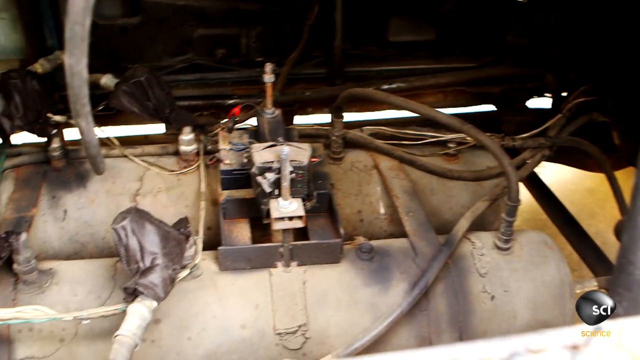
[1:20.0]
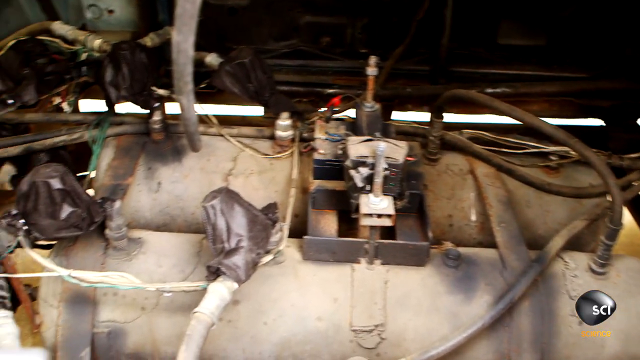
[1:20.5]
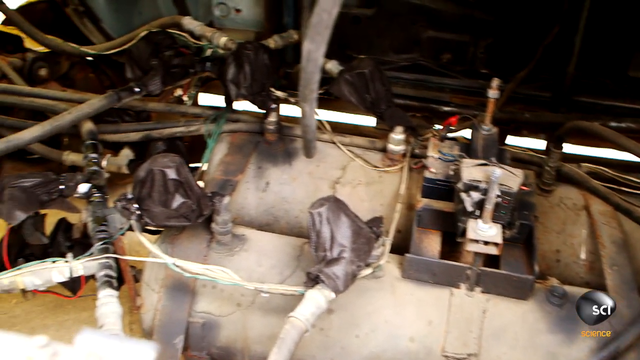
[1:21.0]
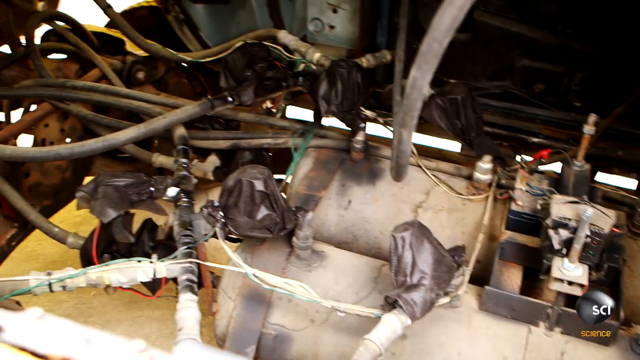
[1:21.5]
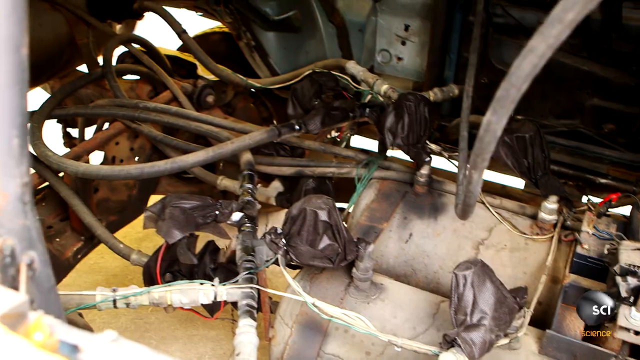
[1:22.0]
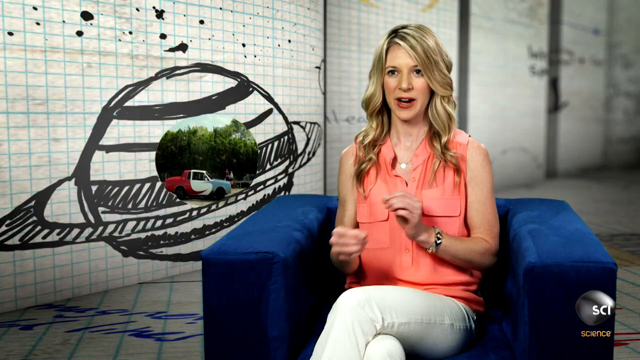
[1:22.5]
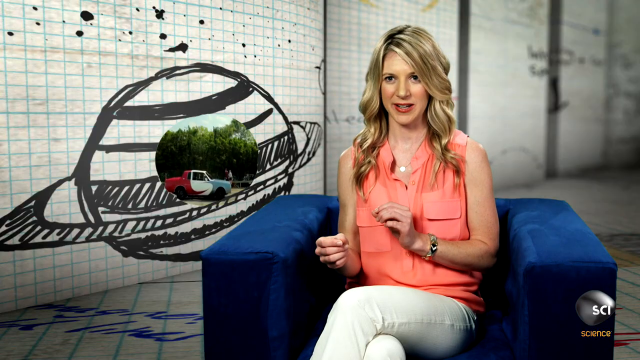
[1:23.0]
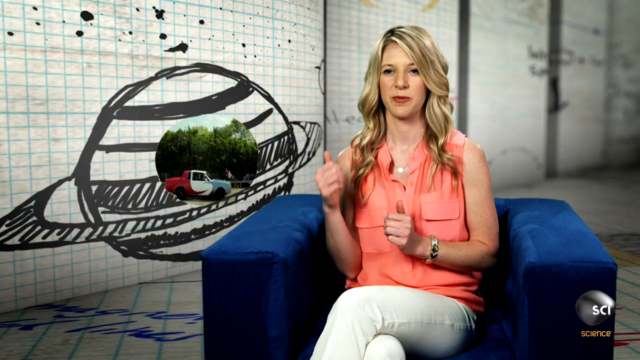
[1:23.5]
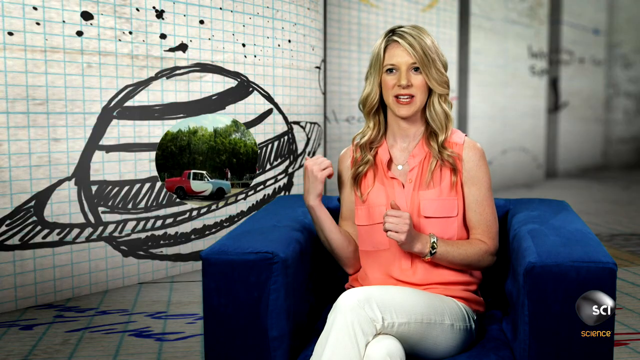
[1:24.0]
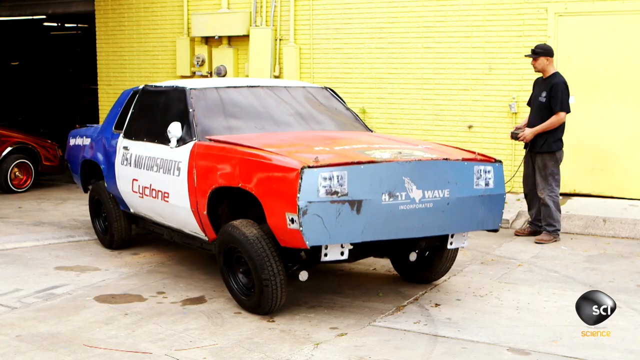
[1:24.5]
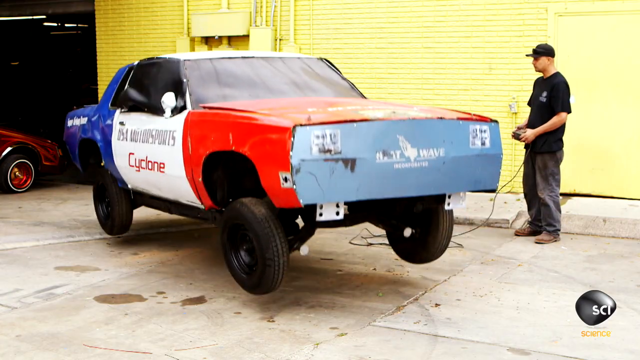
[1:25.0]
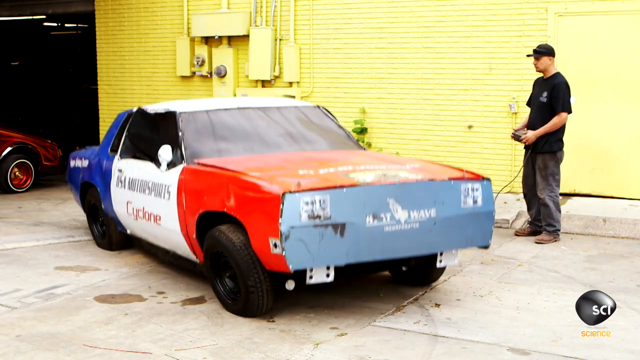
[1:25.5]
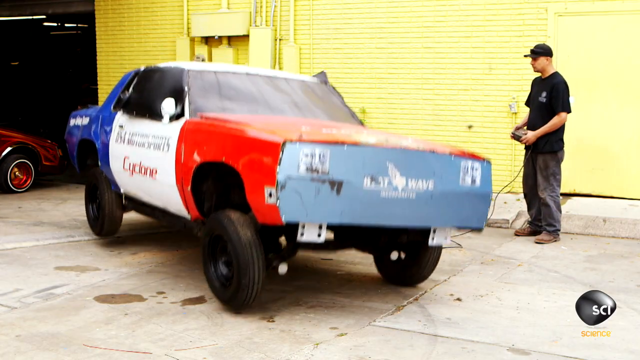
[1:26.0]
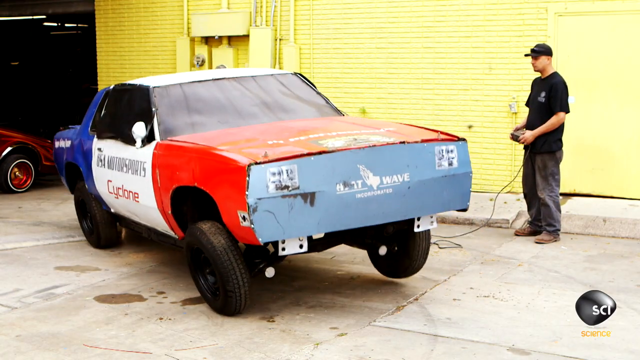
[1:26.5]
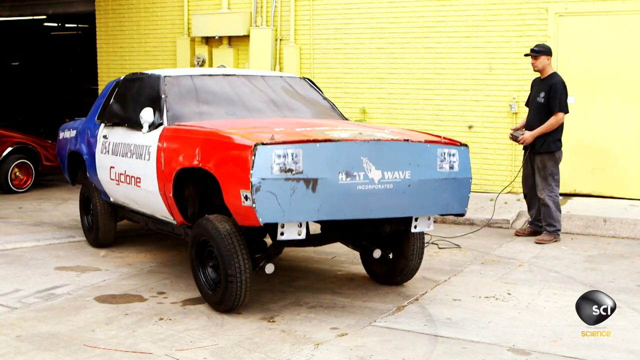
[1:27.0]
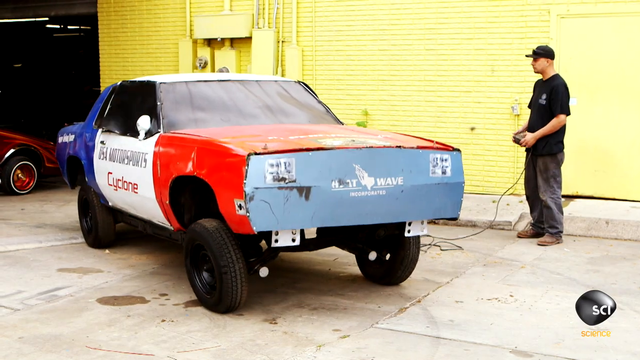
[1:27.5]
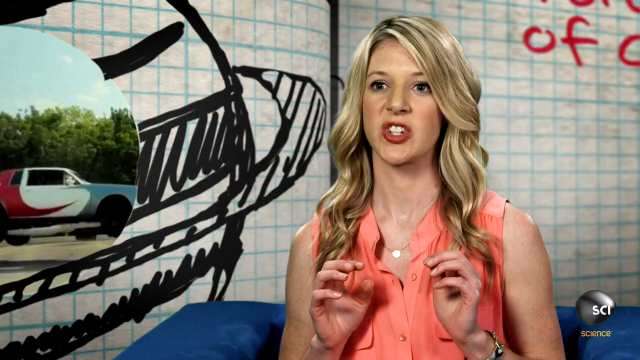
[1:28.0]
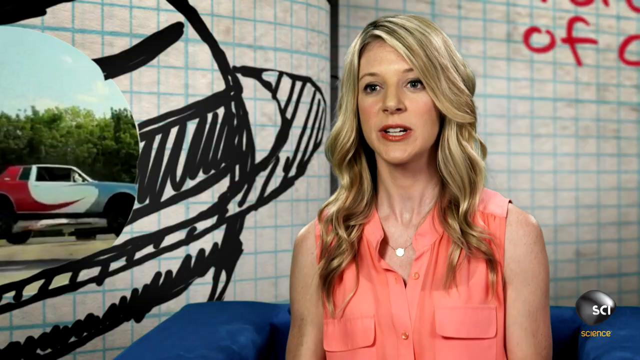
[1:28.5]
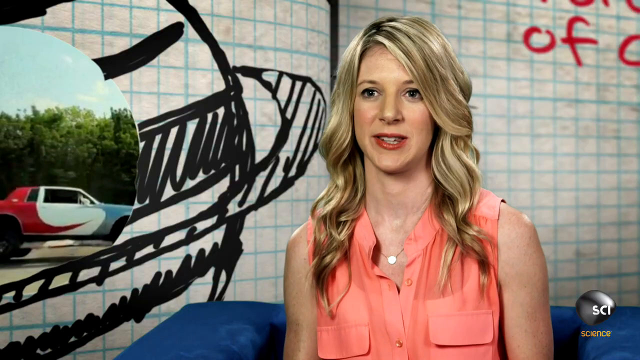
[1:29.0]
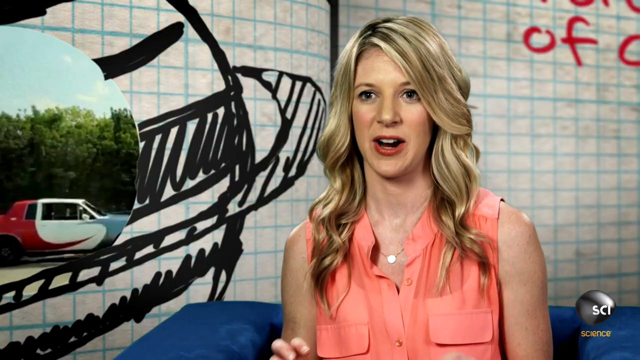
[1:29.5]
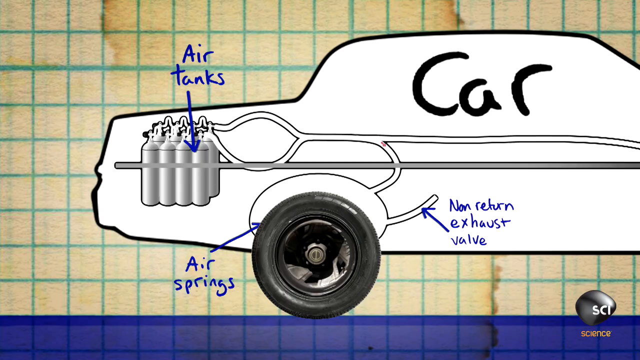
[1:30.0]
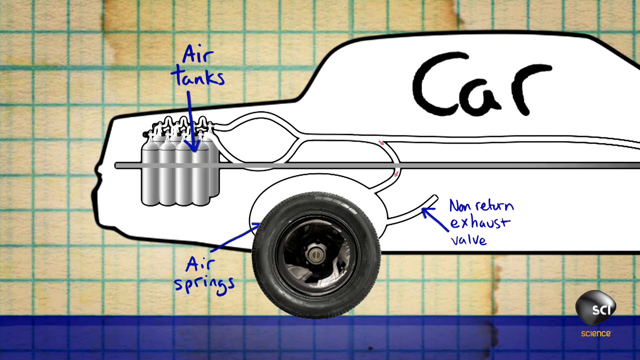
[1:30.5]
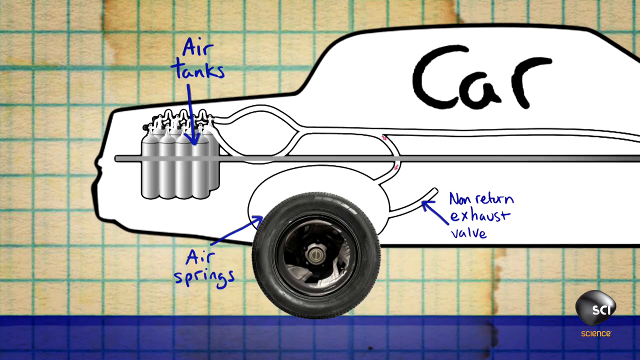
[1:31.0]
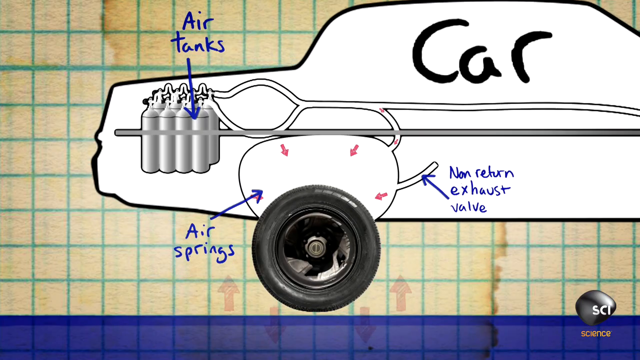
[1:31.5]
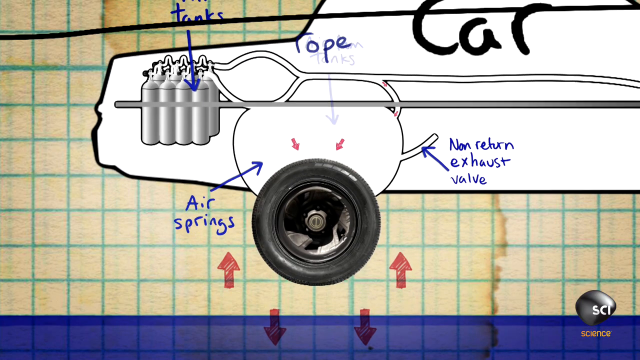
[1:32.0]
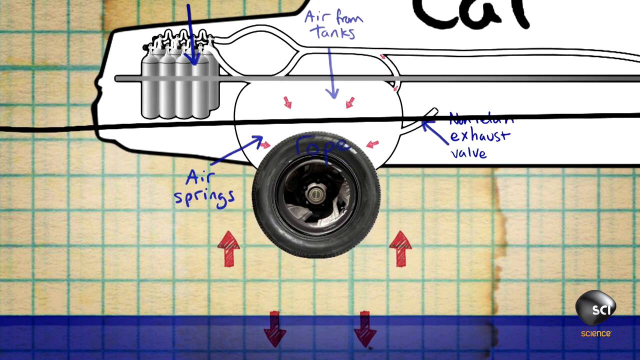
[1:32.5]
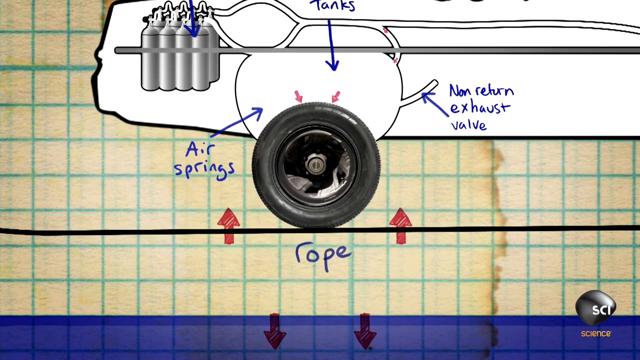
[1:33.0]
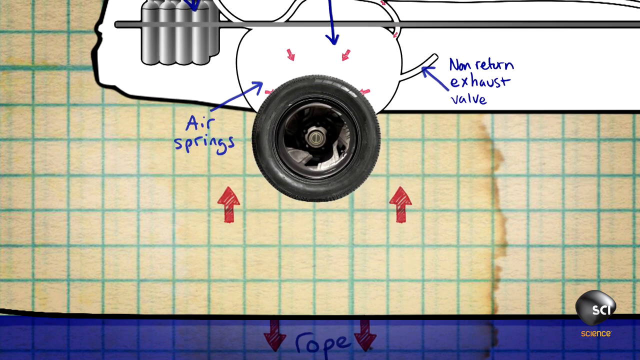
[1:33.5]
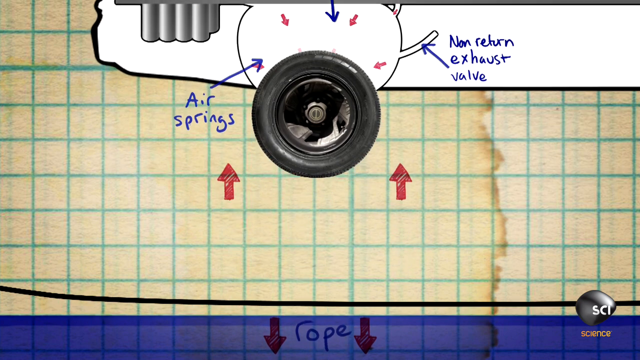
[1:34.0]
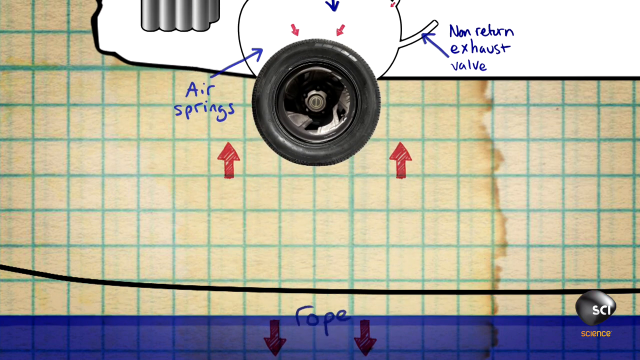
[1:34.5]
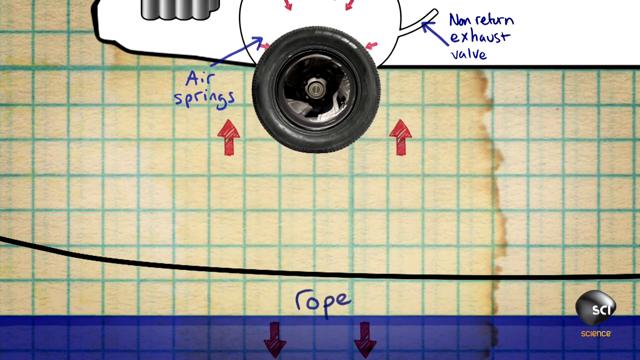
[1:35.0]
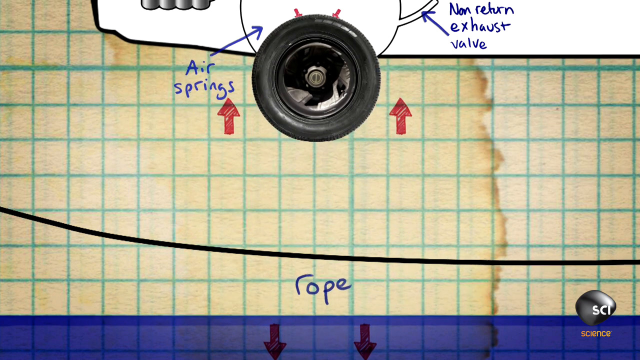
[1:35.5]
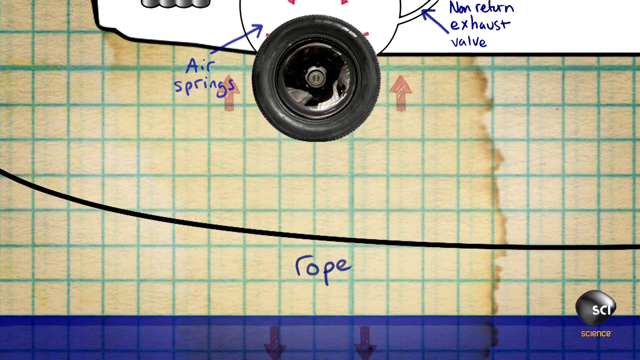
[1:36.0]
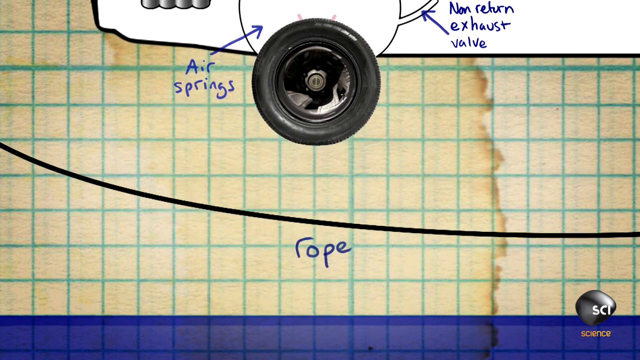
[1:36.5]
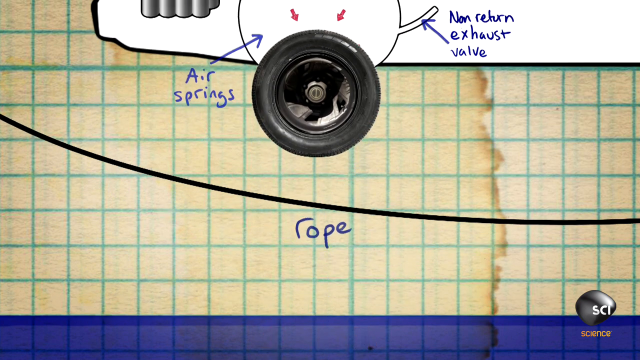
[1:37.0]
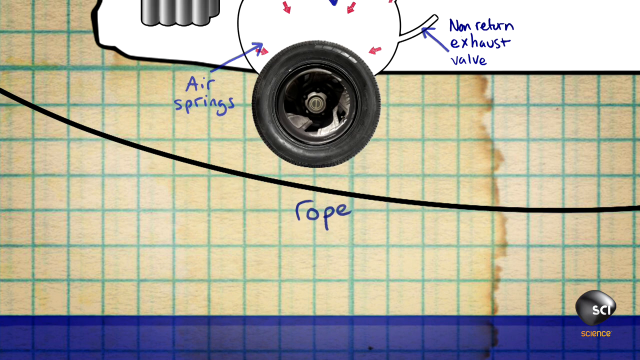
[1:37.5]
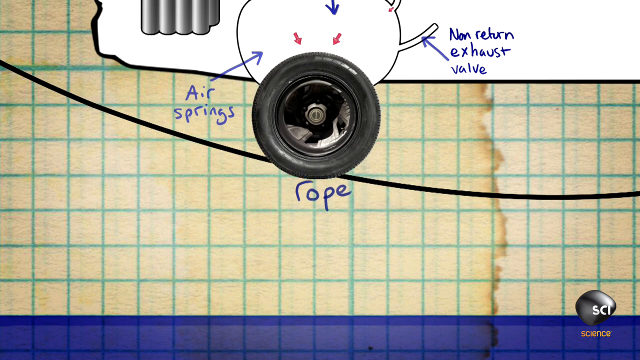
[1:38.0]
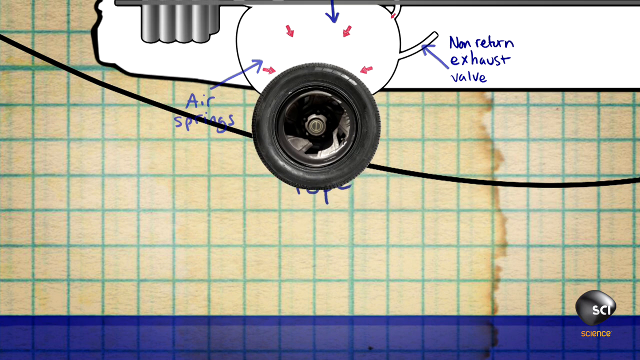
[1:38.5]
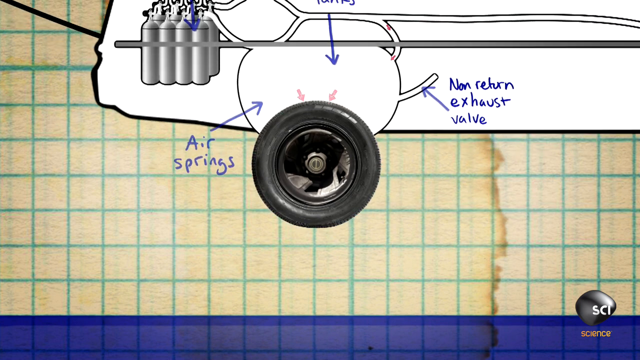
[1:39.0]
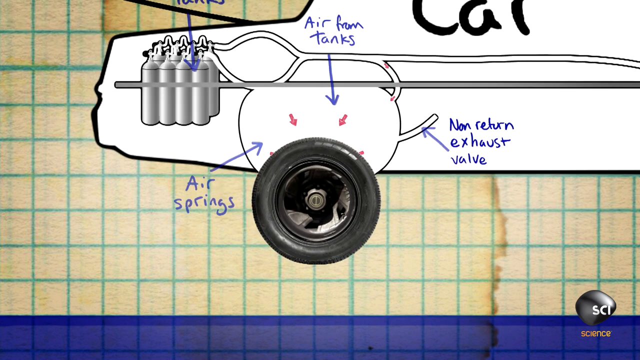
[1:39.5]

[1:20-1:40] Shots of the engine are followed by a cut back to Jessica, who gives more explanation for a very short time. As the shot widens, more of Jessica is visible: she wears light jeans and has a metallic watch on her left wrist. The video quickly cuts back to the man in the black baseball cap, who shows how he controls the car to make it bounce into the air. The car bounces around and then quickly settles down; when it lands there is no visible bounce. The video cuts back to Jessica, who continues her explanation. A cartoon display of the car then shows air tanks in the boot, with air passing along pipes until it reaches the air springs, which inflate and cause the car to jump into the air over the rope.